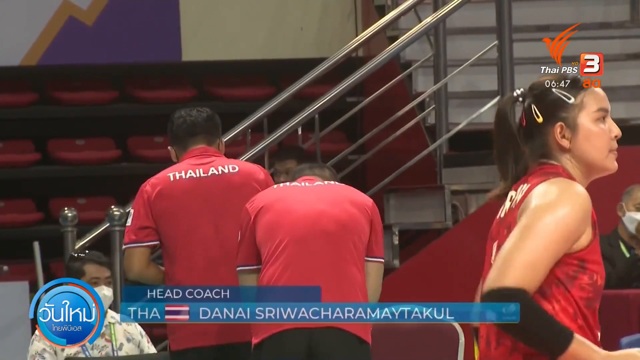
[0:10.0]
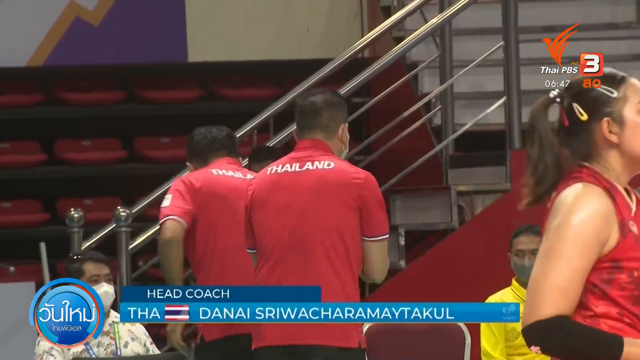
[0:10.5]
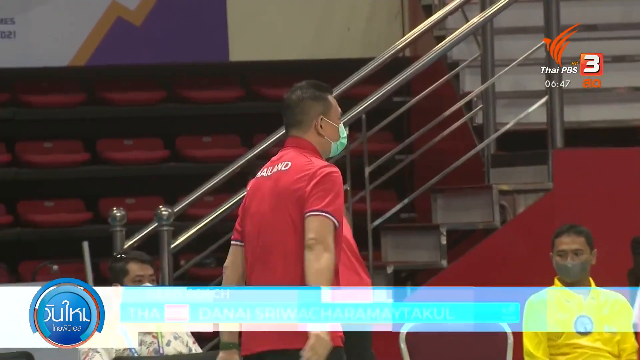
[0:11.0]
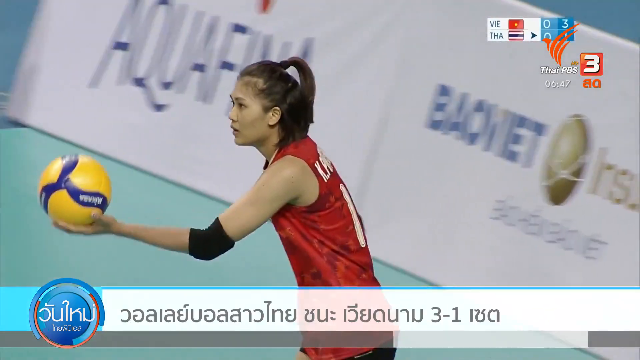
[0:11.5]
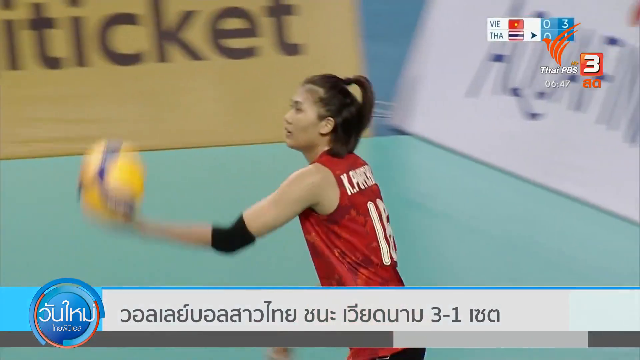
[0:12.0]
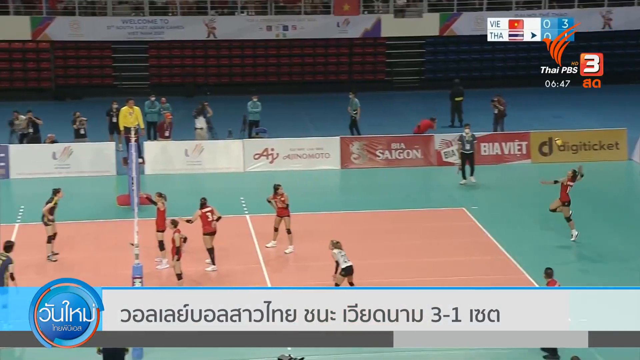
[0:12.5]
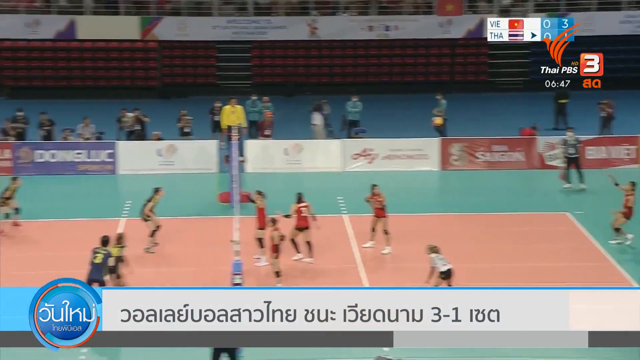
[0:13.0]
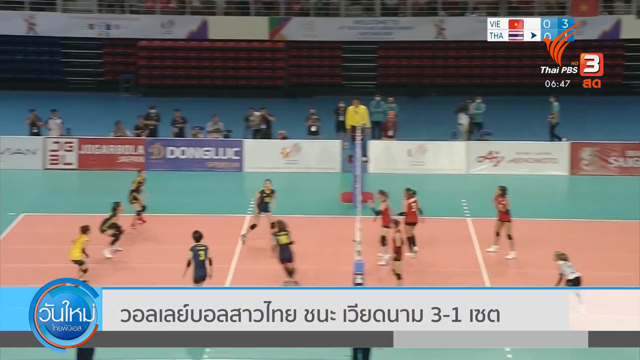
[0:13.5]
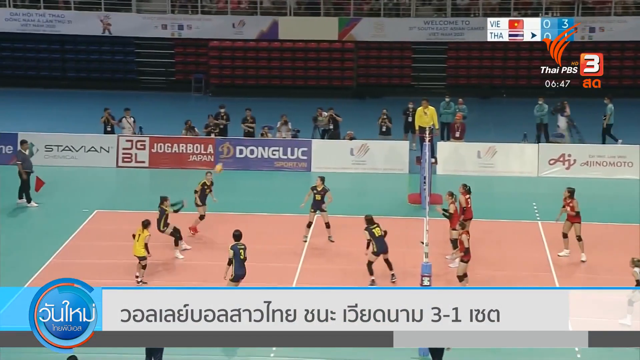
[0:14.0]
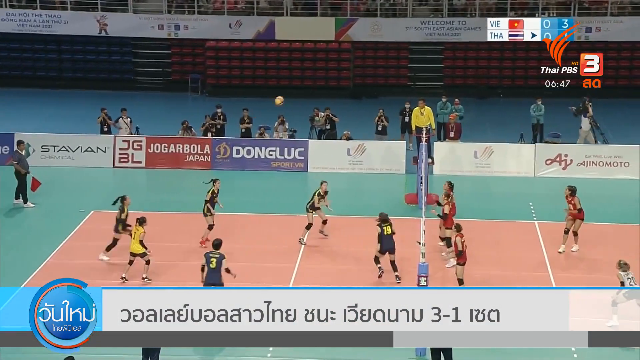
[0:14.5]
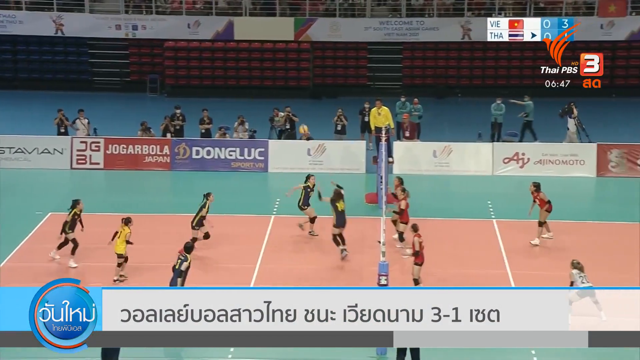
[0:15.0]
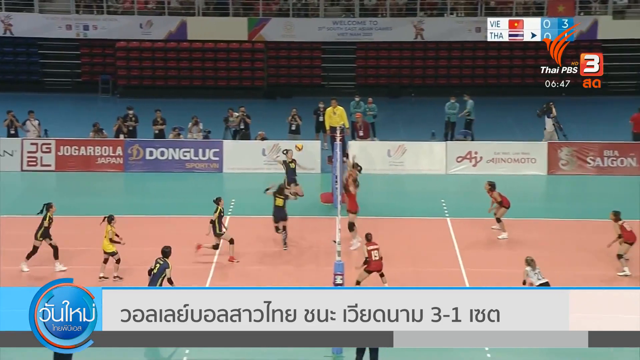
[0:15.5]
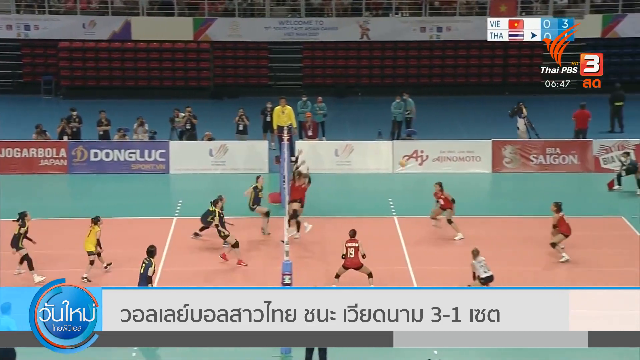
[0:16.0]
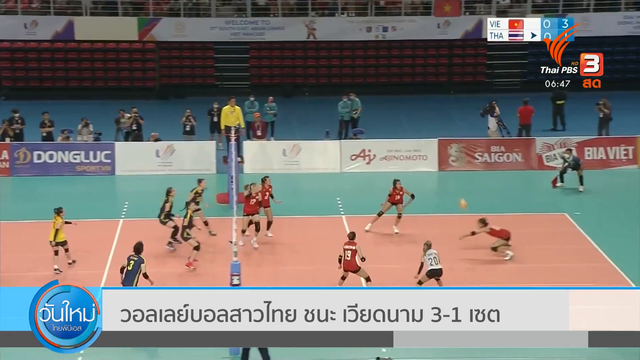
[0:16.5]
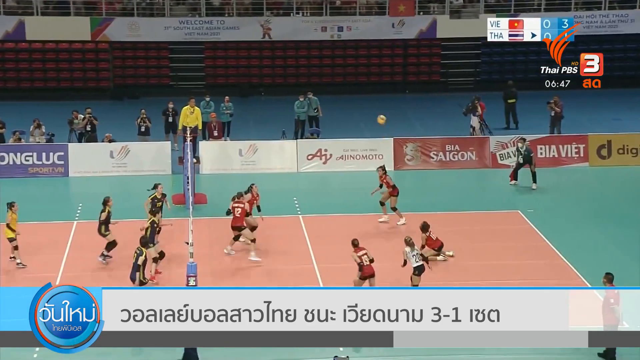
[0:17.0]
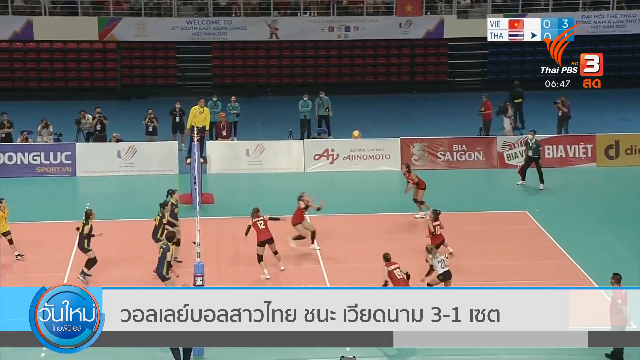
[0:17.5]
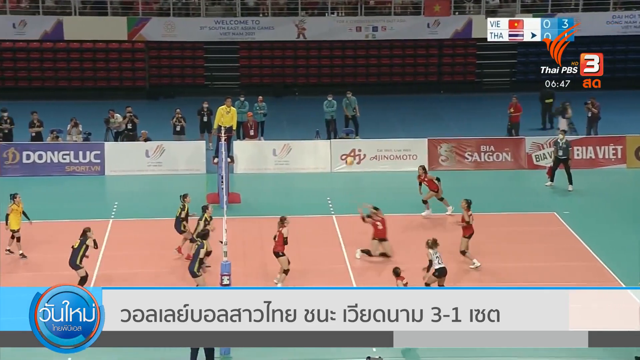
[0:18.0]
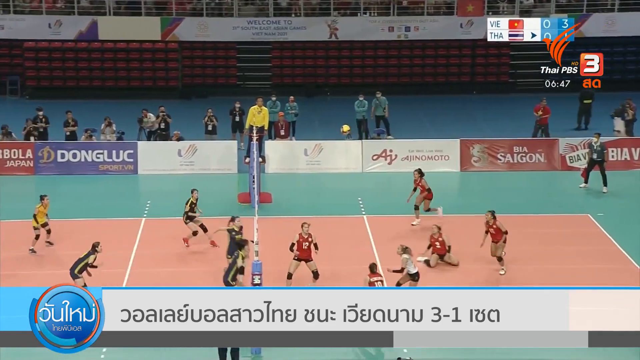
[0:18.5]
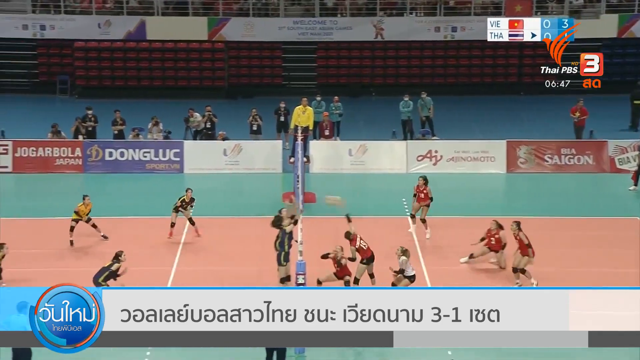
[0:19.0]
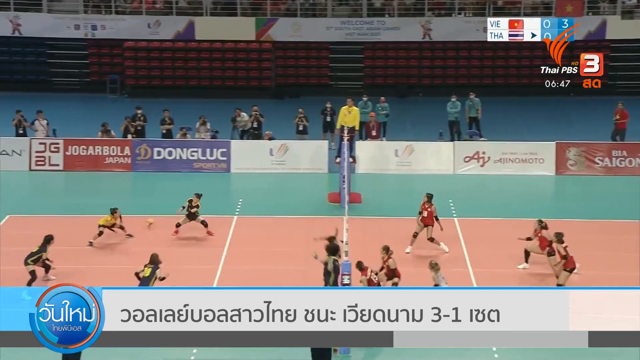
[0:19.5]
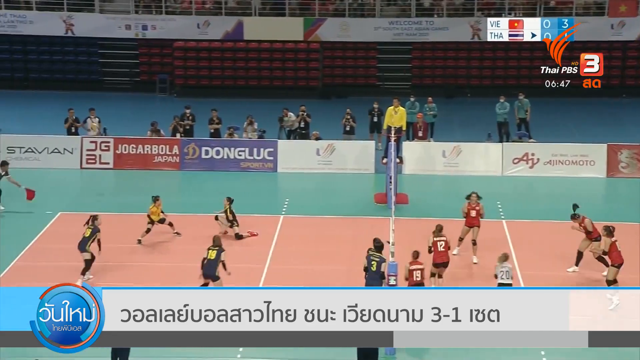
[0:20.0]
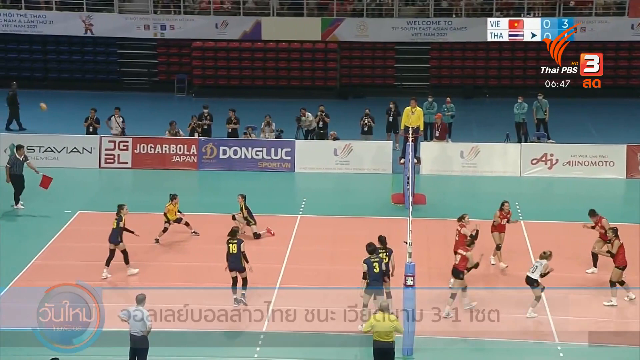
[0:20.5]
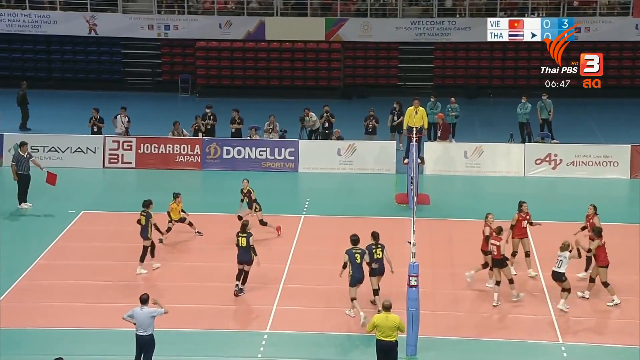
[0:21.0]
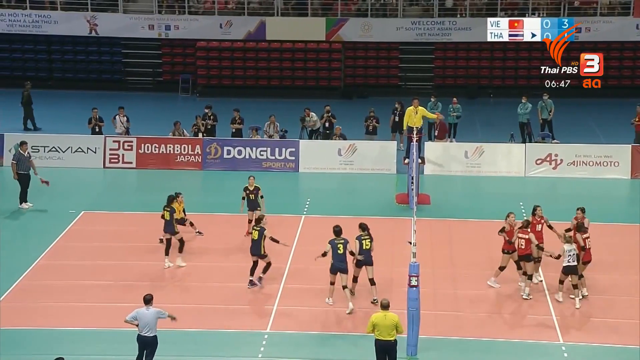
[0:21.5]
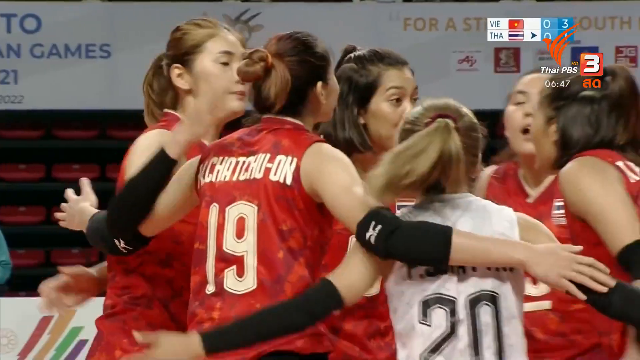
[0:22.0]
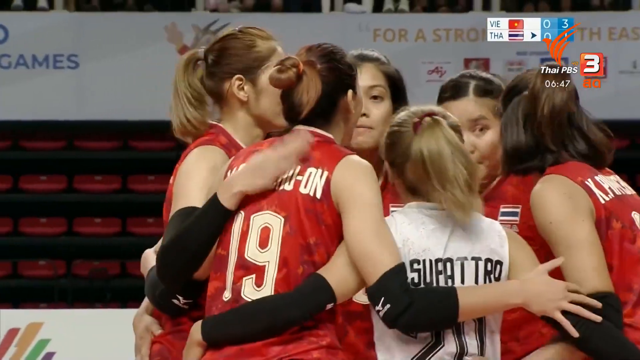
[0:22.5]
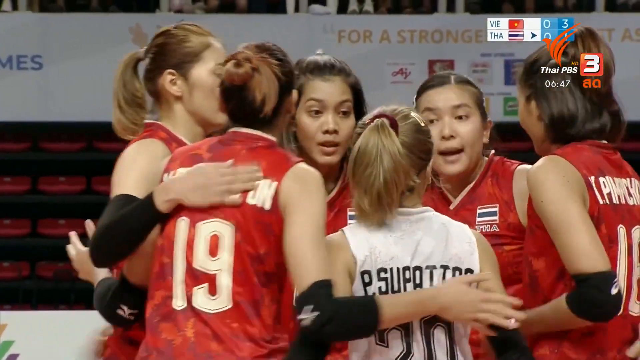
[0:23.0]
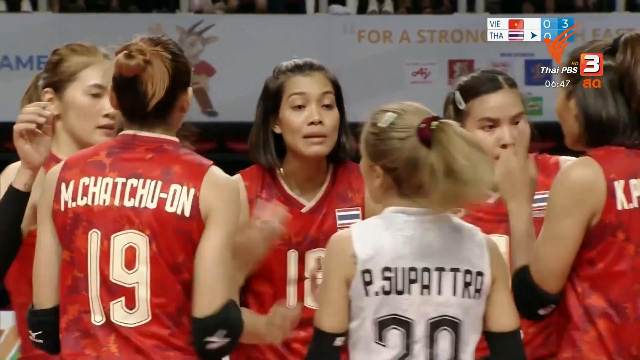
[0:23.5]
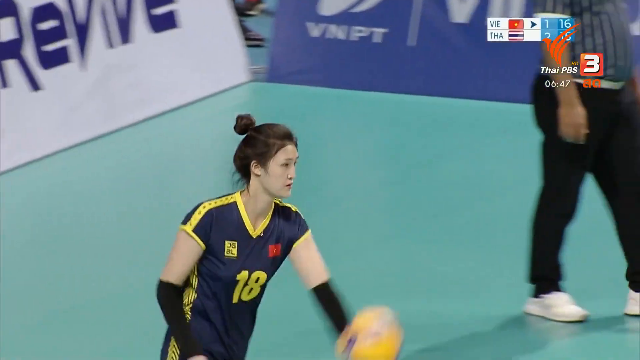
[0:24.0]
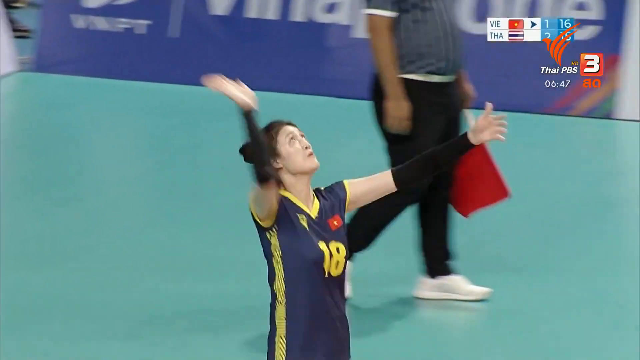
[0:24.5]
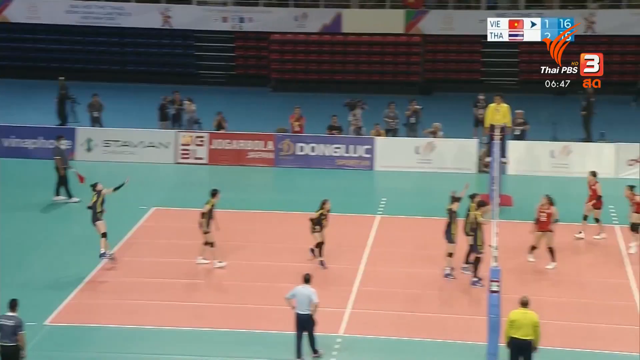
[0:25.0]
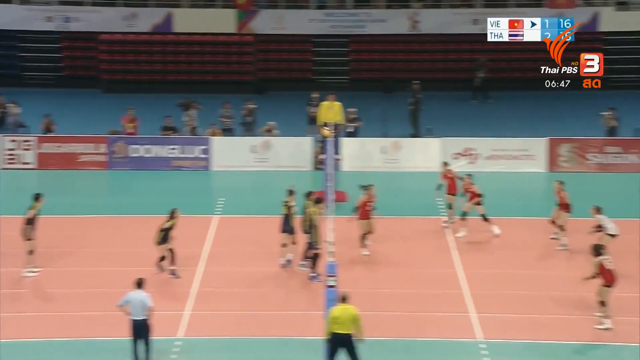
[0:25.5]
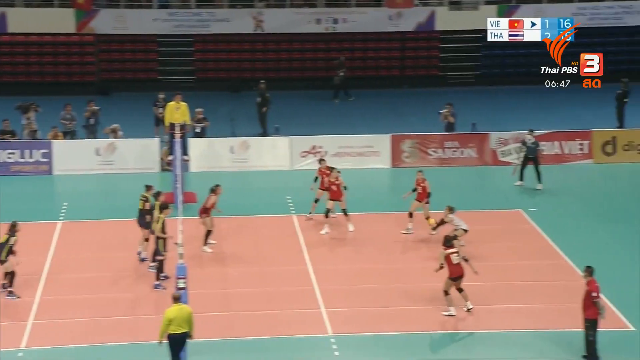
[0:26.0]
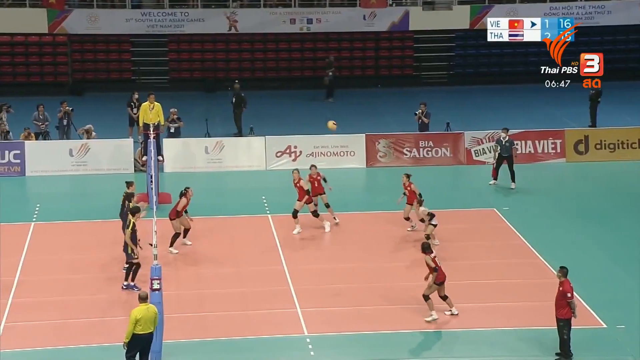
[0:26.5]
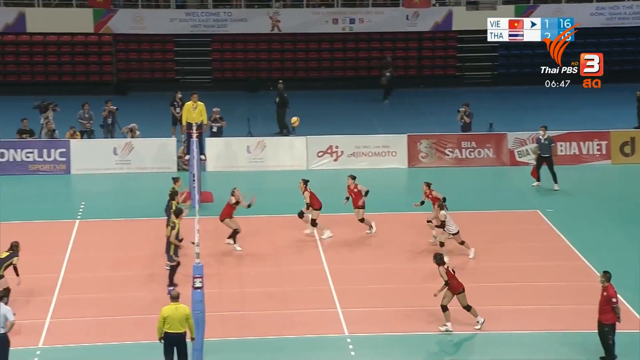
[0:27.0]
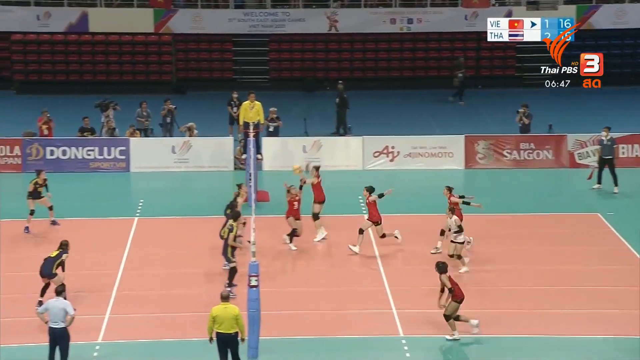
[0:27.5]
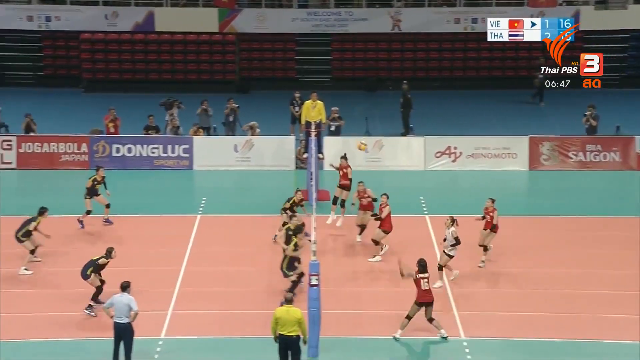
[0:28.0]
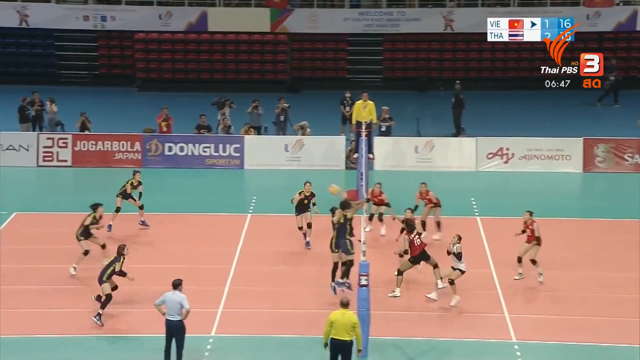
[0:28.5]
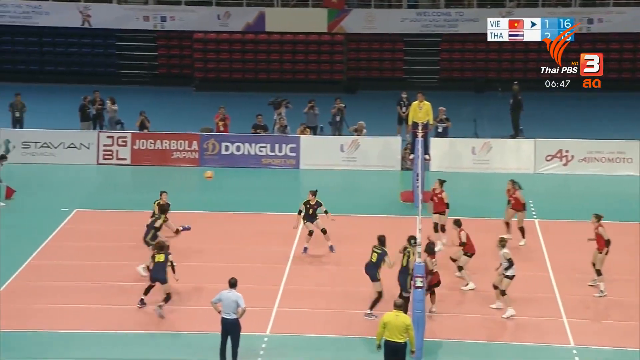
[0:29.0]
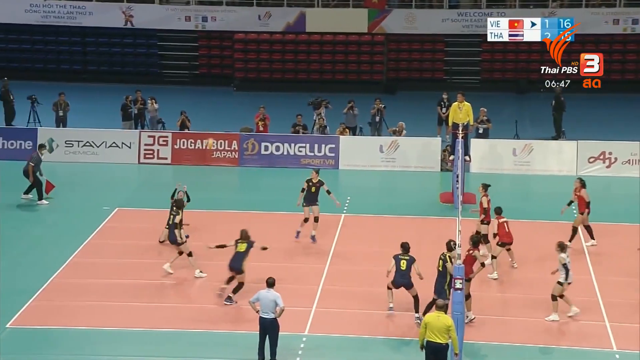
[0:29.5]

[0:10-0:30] A woman serves, and the ball is returned in three hits, with a spike from the opponents. Thailand saves it, the ball is set up for a Thailand spike, and Thailand scores the point. The players all huddle up and talk to each other. Play resumes with a serve from the other team and a clever return from Thailand, with one, two touches, a fake spike and a spike. The ball is clipped at the net by one of the players on the other side, but it still sort of floats over to the back line, and the other team saves the return before the shot cuts away, so the end of the rally is not shown. The score appears at the top corner, along with what is presumably the TV channel's brand. The match seems to be mid-way, possibly in the fourth game.